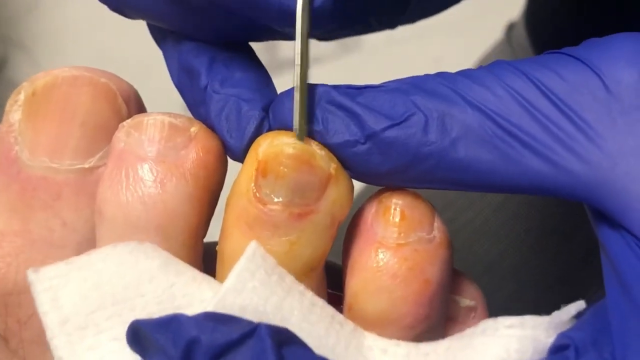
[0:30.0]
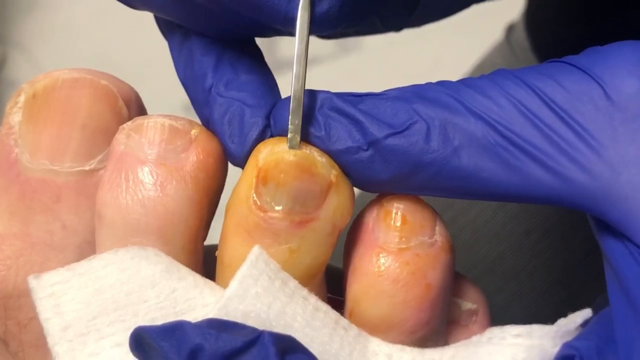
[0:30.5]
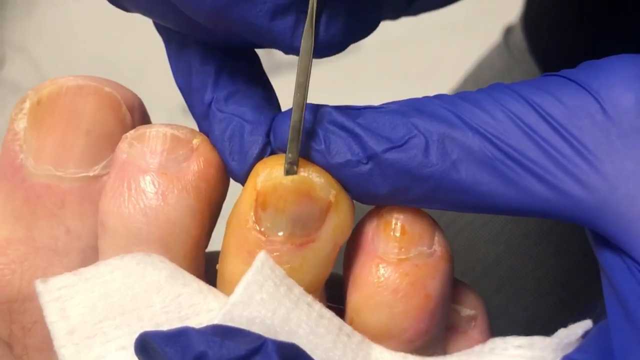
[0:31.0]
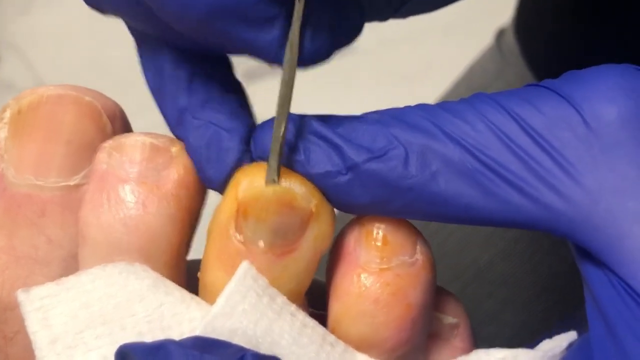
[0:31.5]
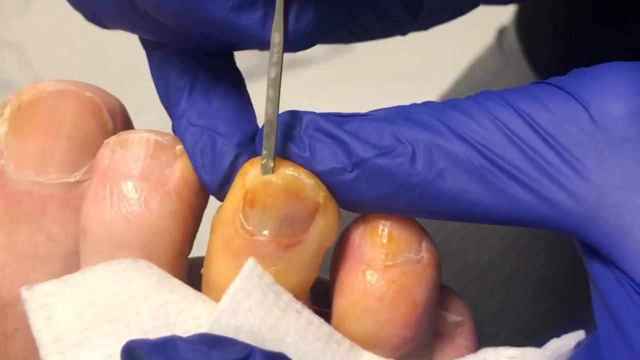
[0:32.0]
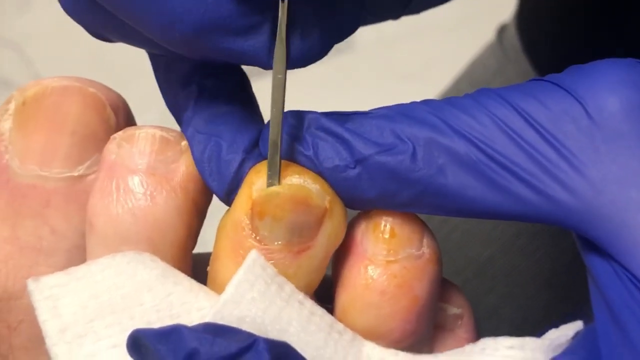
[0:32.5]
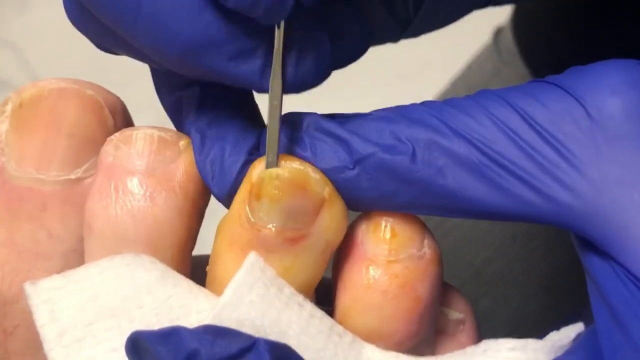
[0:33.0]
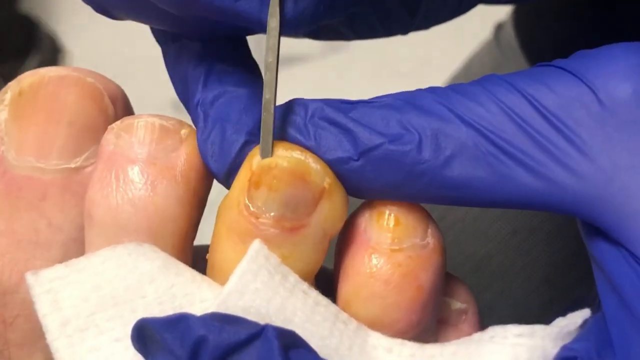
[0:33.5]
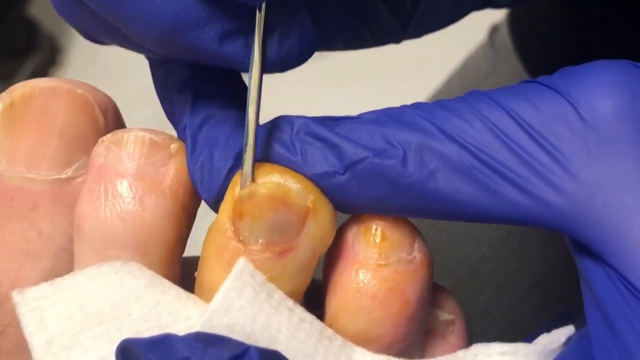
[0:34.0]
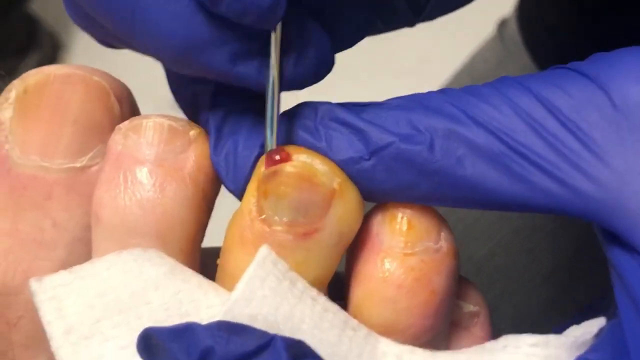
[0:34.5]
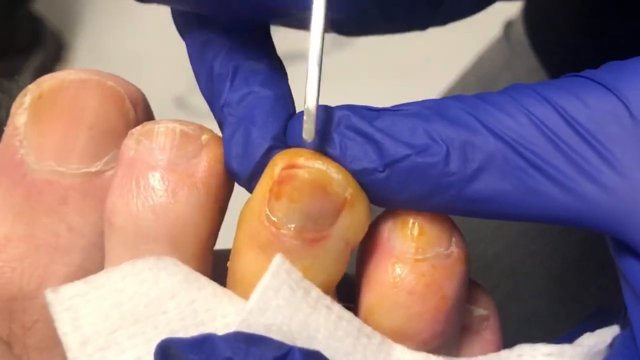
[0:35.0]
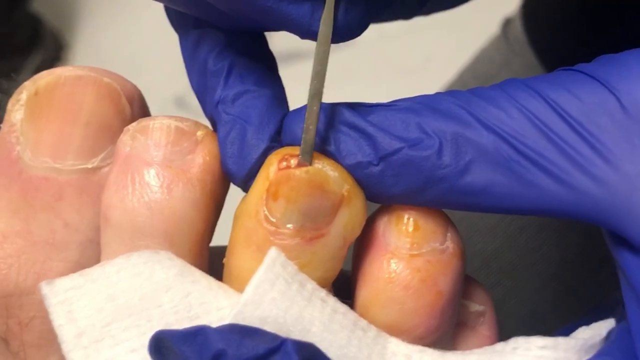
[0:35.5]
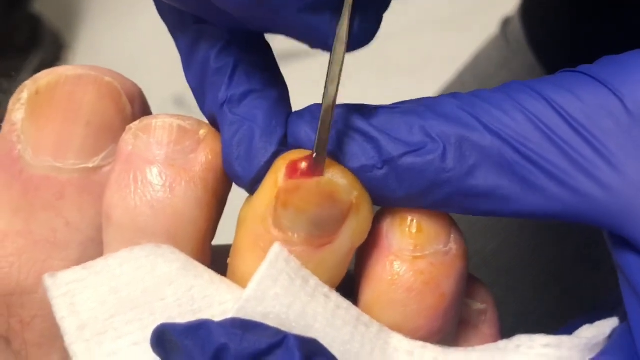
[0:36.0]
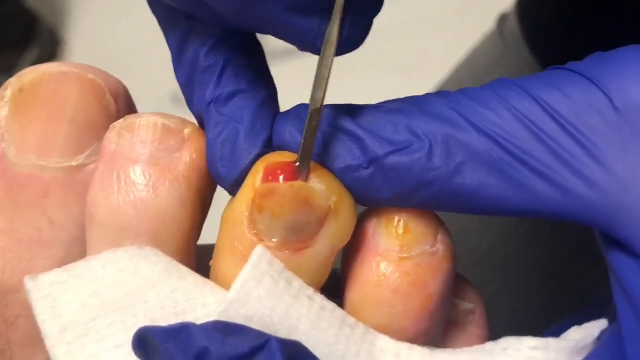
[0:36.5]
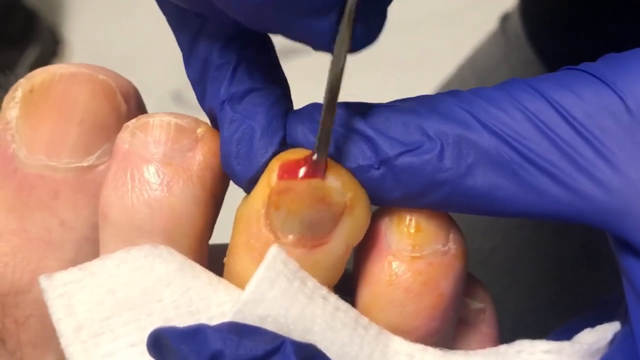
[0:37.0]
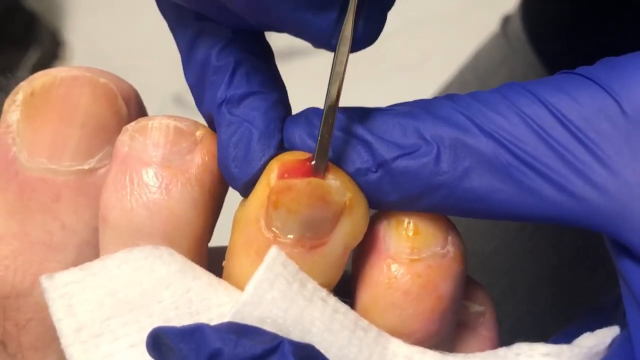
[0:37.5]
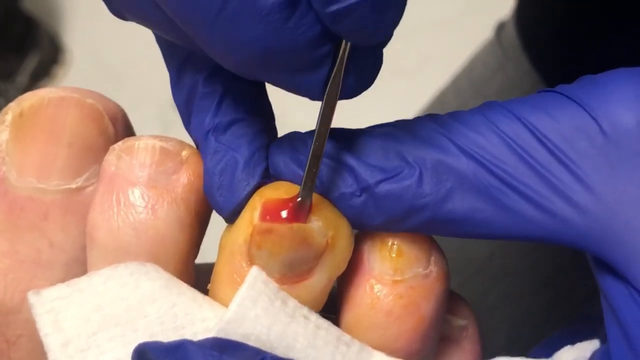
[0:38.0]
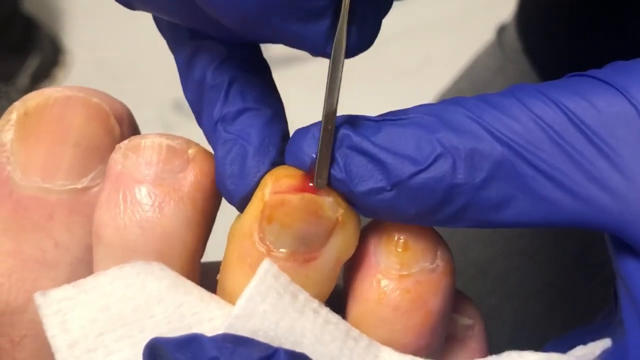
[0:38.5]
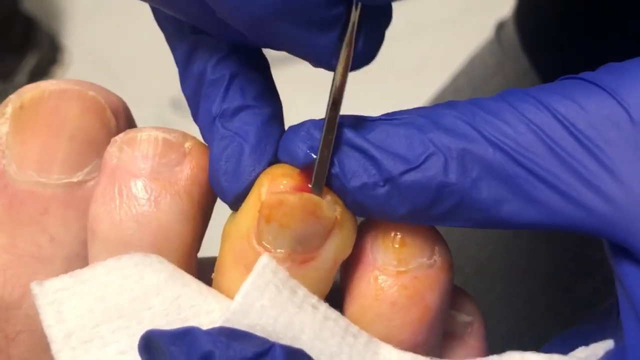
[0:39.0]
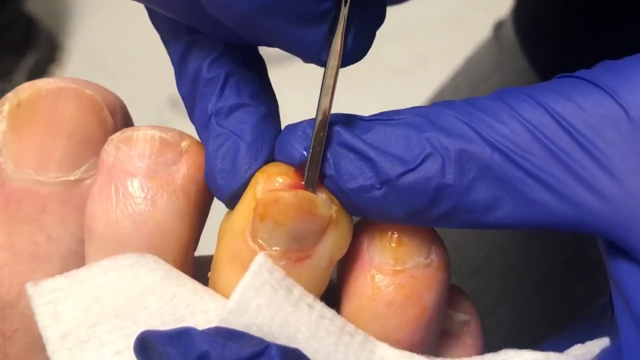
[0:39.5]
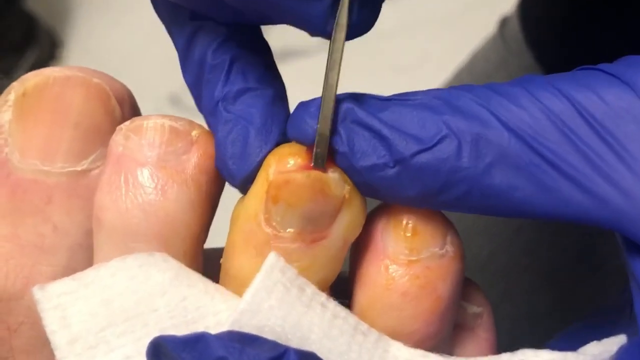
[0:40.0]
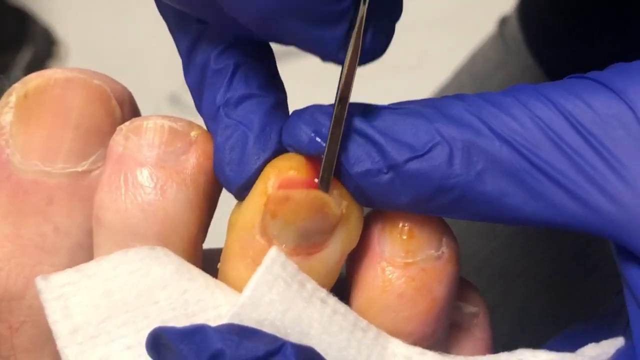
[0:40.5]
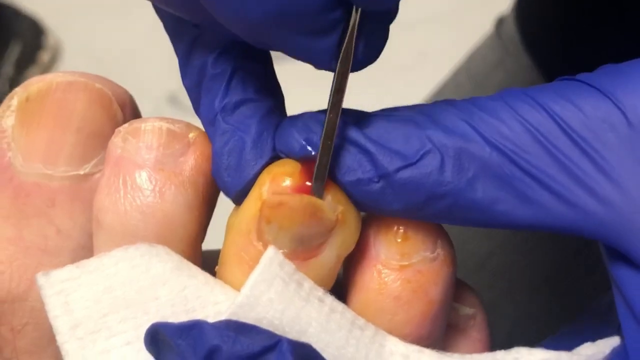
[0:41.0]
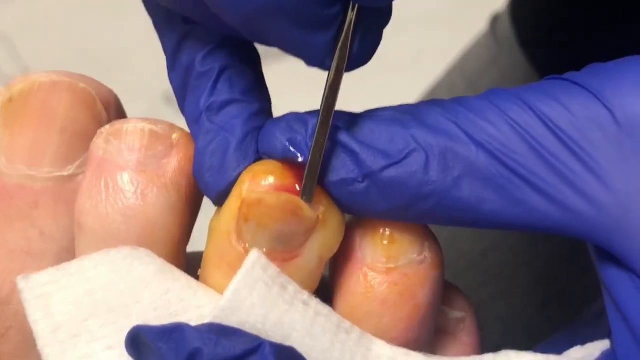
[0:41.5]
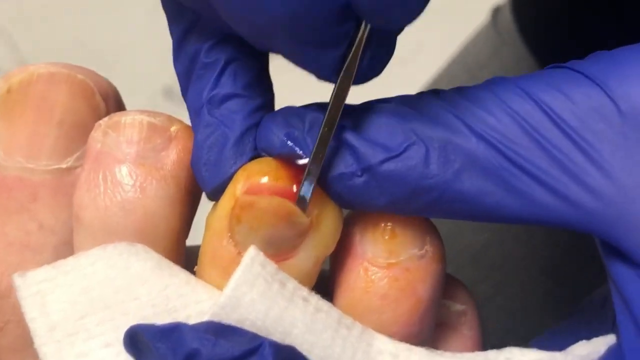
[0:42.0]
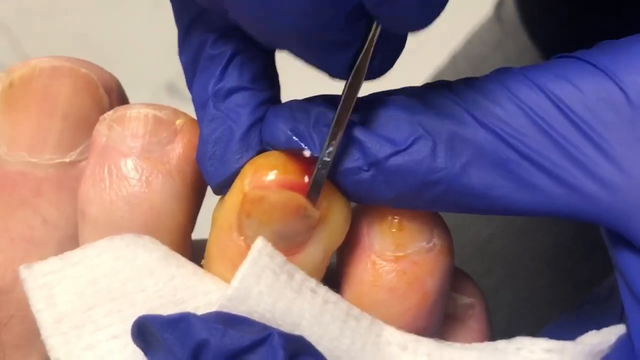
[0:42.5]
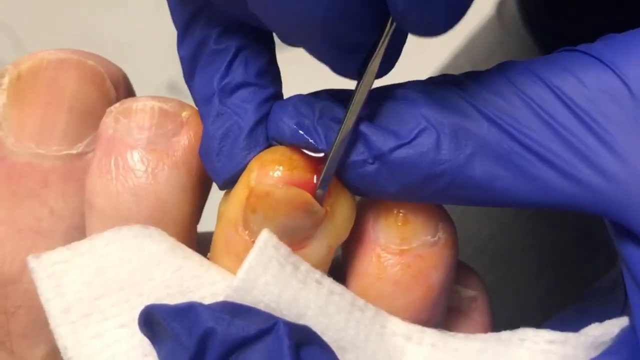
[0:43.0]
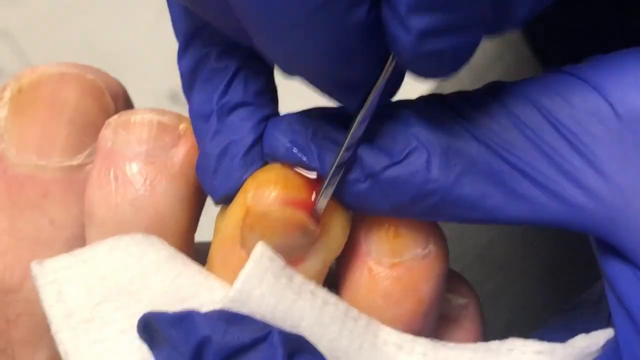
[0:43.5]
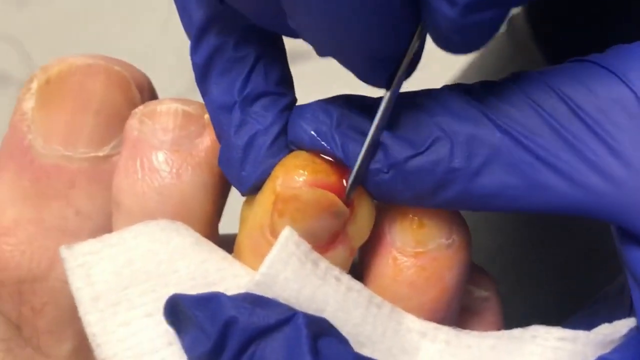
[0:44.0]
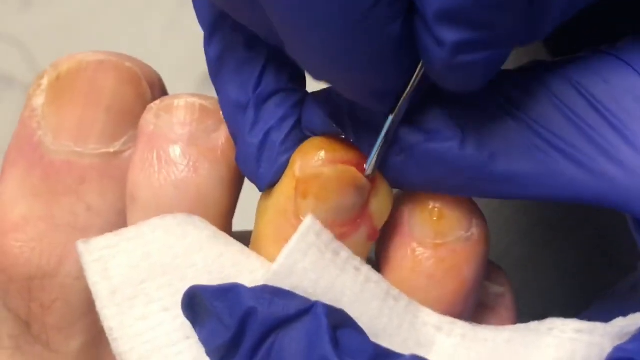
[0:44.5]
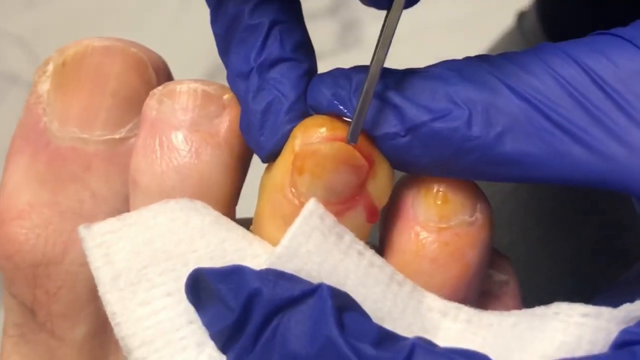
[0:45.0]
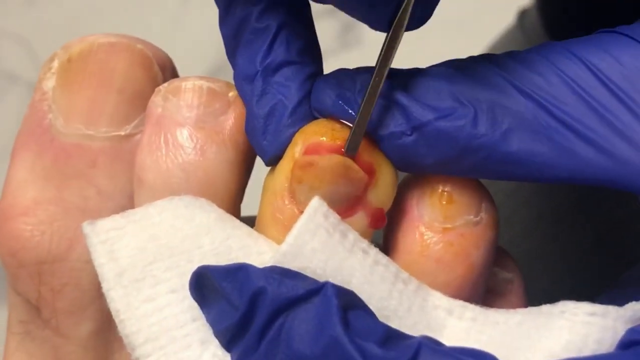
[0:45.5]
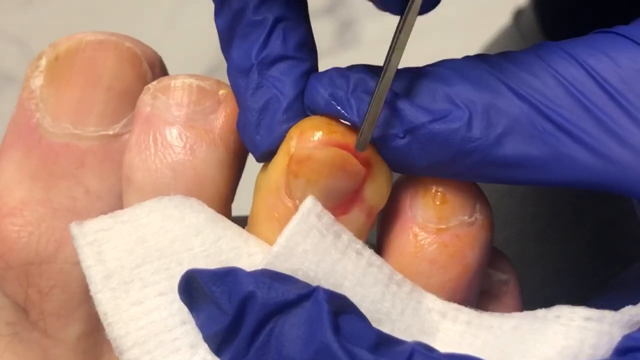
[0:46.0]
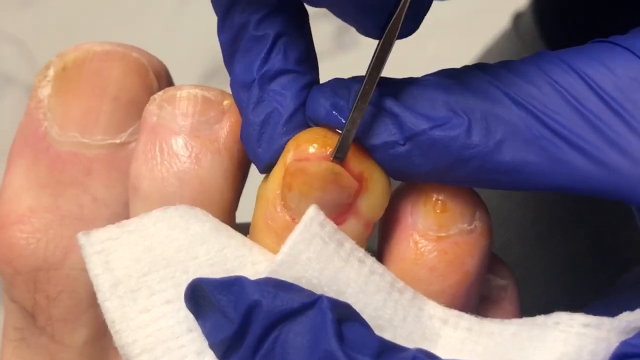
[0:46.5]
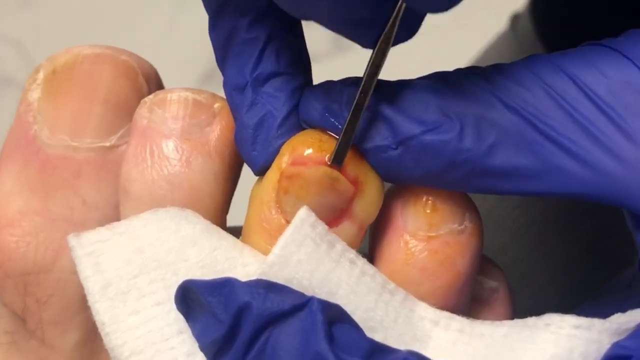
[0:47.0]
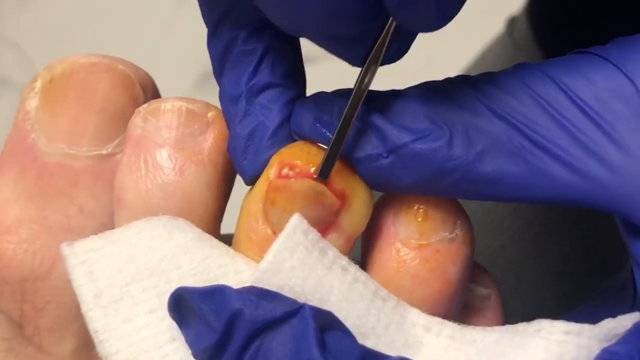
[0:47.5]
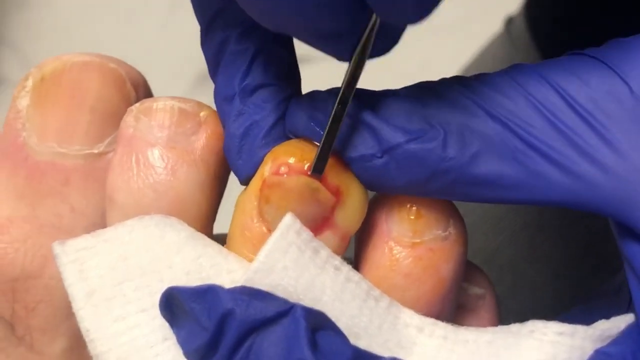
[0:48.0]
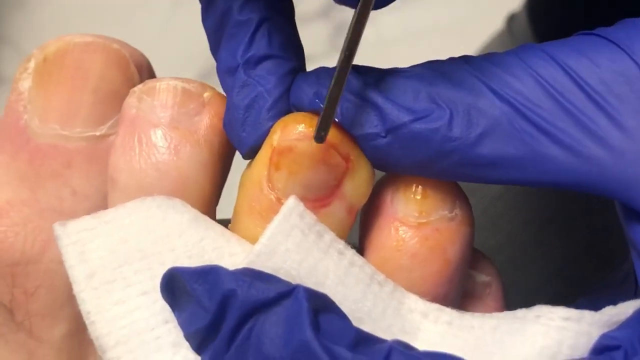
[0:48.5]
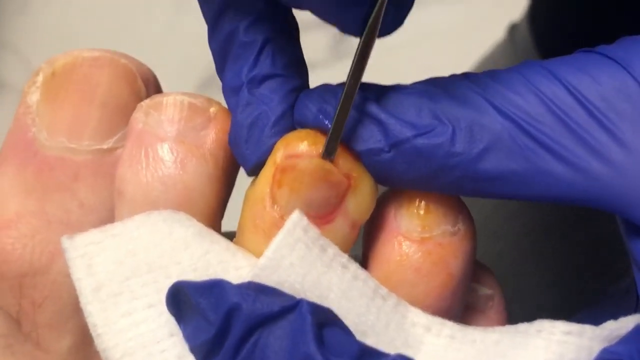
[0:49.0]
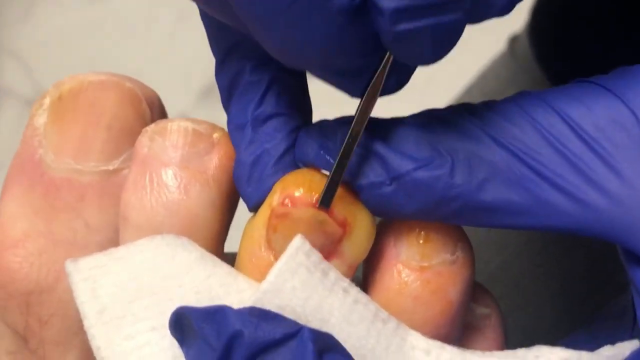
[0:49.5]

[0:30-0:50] The person, still in dark blue gloves, uses a piece of gauze to hold the toe with their thumb while pushing the metal object into the top of the toenail. It looks like they may be trying to take the toenail off, which they do. The metal object now reaches almost from the top of the toenail to the cuticle. They move along and push, and as they get toward where the toenail ends, a lot more of the liquid starts to pop out, this time very red-tinged. They seem to be moving the object all along the toenail to loosen it. By now the nail is covered in the liquidy blood, and when they push down it bubbles at the top as it is forced out.